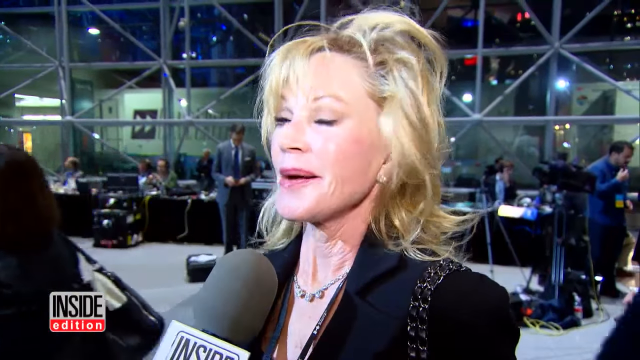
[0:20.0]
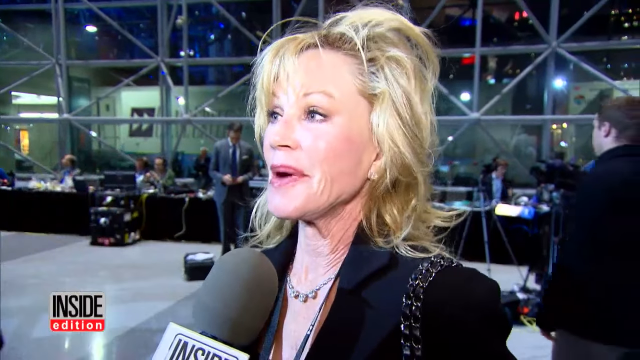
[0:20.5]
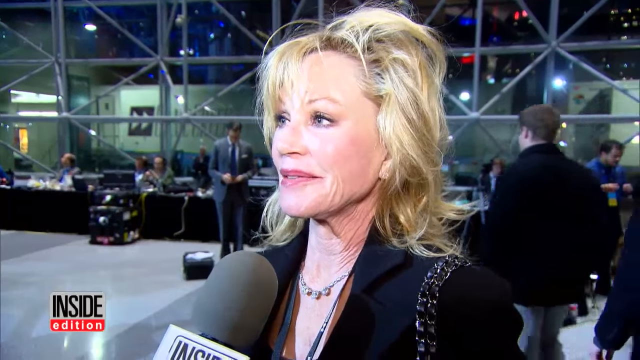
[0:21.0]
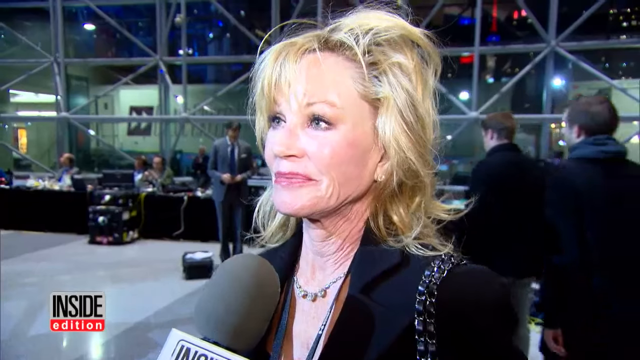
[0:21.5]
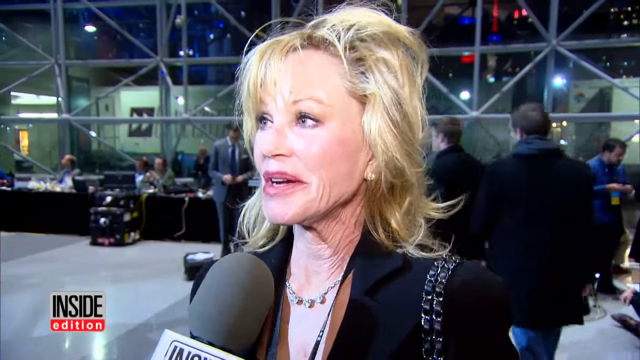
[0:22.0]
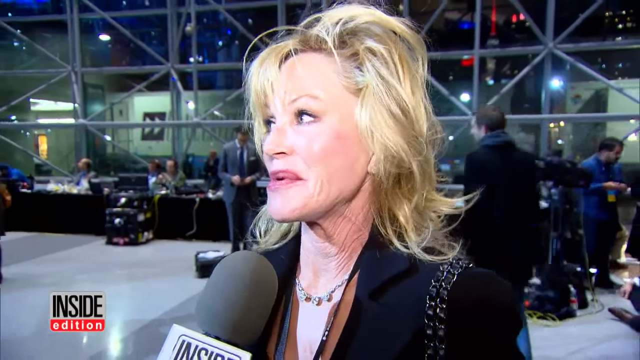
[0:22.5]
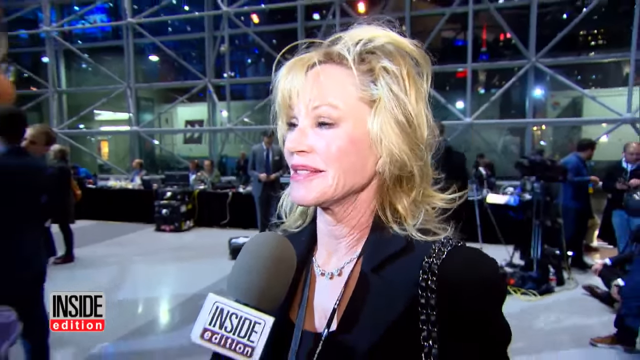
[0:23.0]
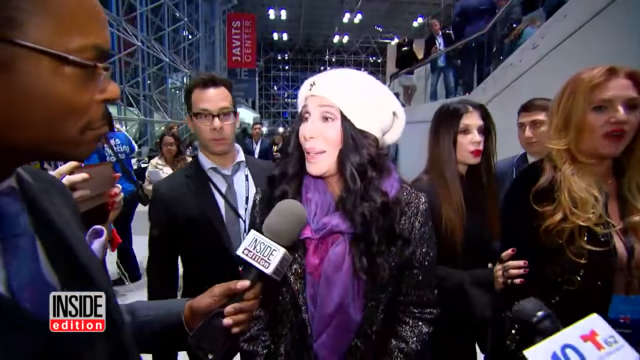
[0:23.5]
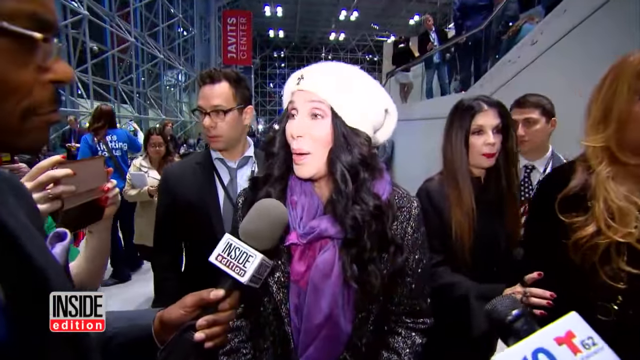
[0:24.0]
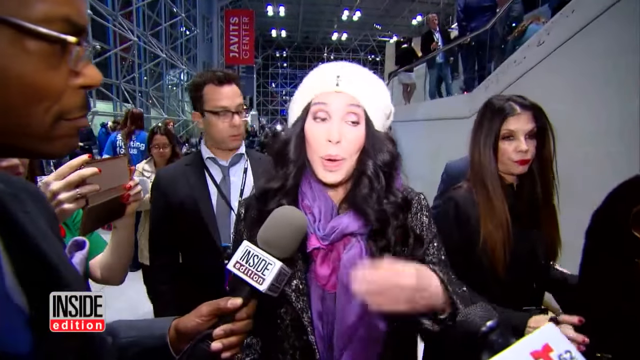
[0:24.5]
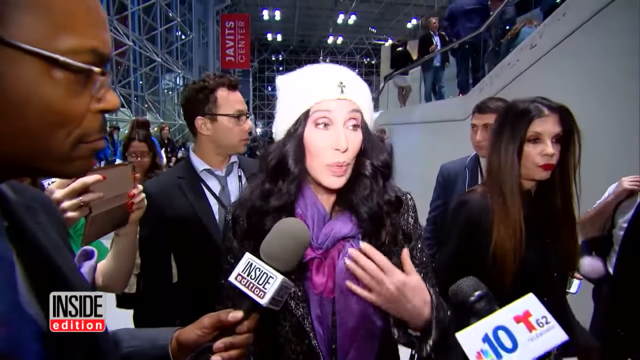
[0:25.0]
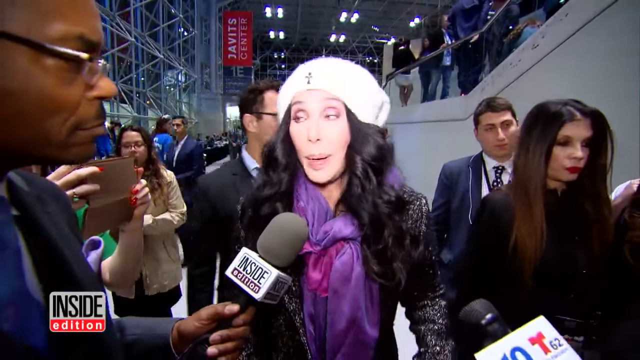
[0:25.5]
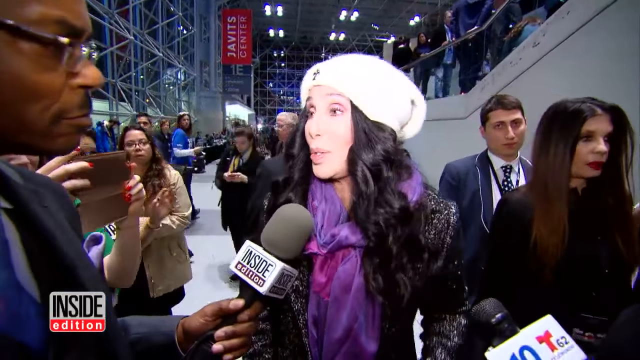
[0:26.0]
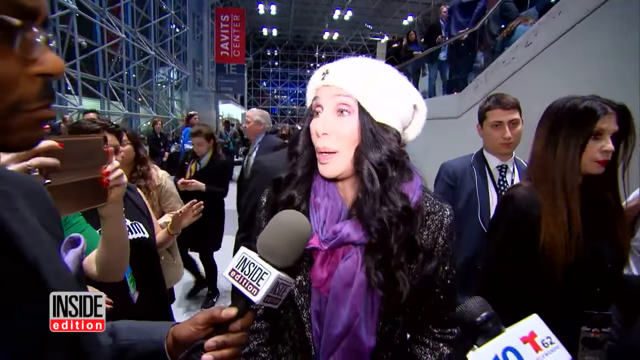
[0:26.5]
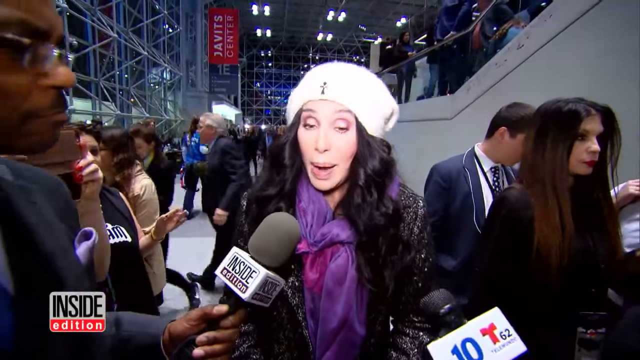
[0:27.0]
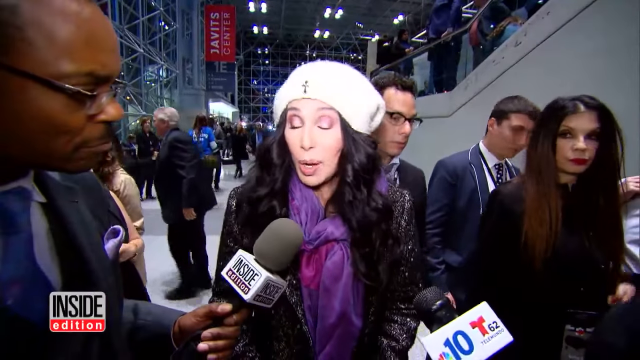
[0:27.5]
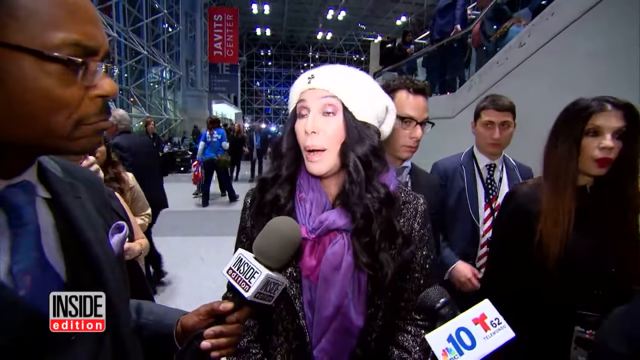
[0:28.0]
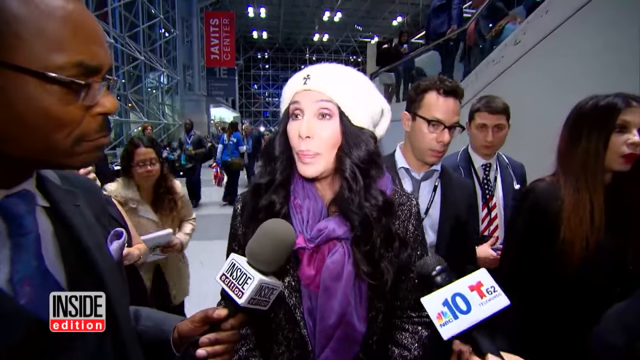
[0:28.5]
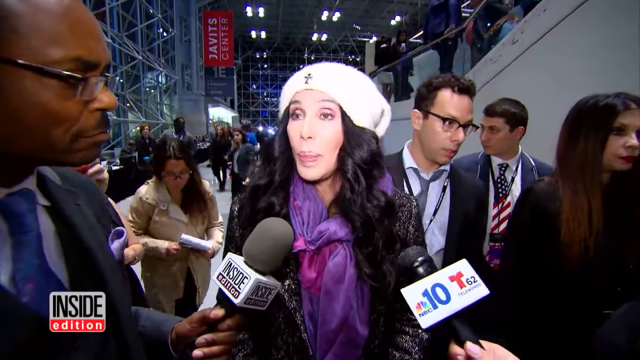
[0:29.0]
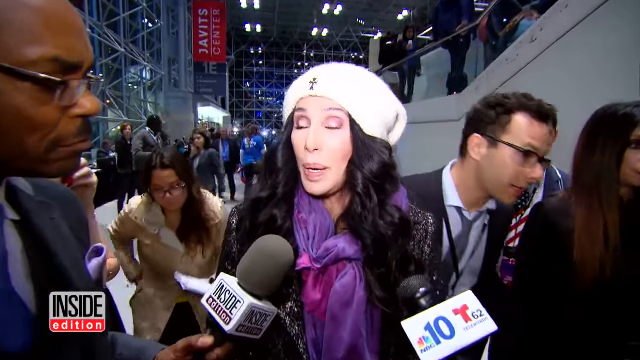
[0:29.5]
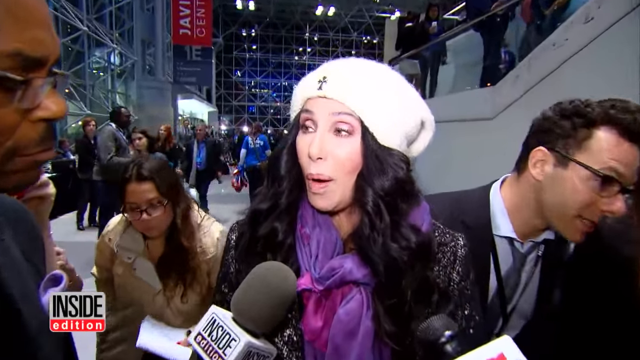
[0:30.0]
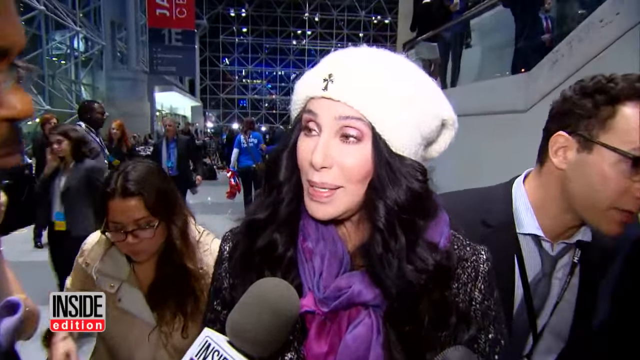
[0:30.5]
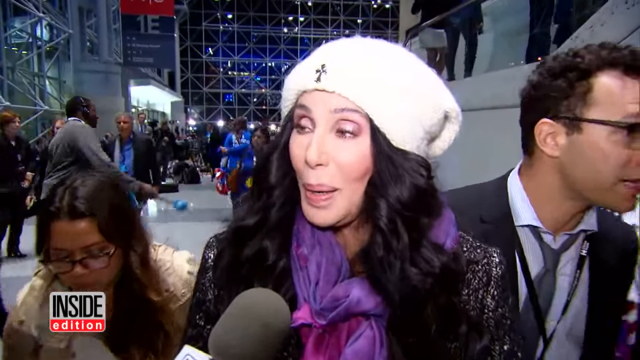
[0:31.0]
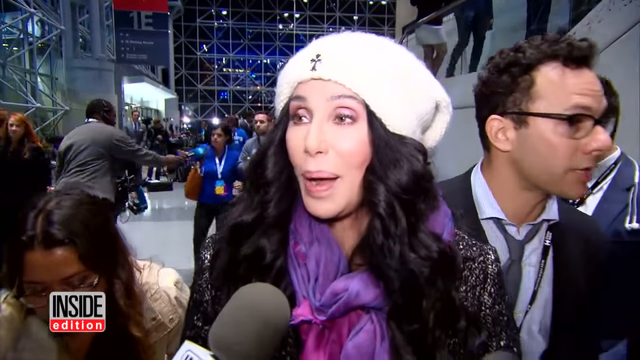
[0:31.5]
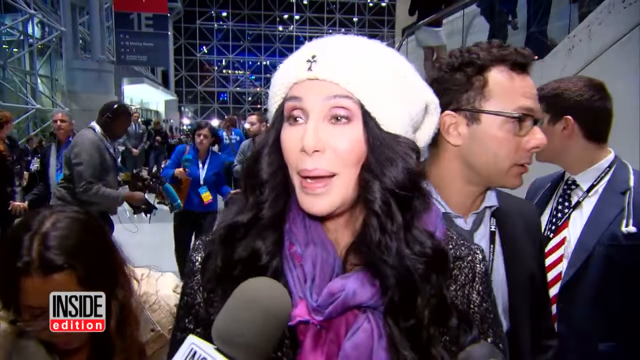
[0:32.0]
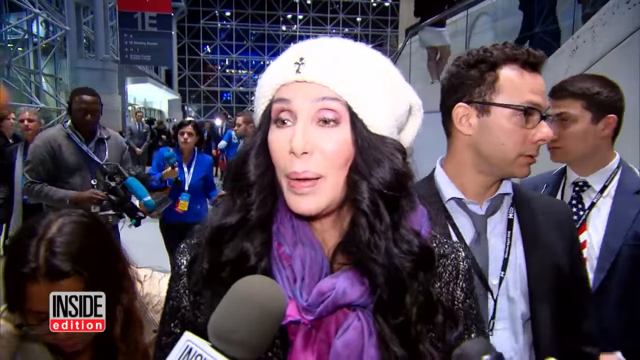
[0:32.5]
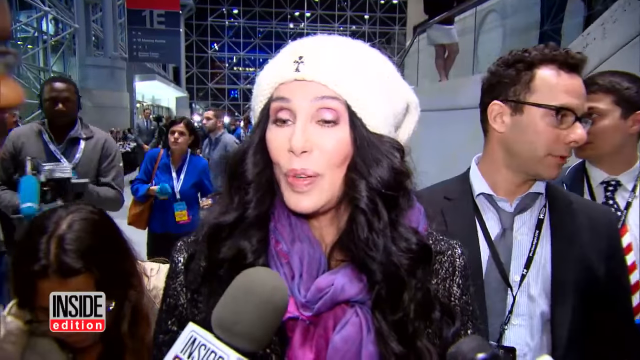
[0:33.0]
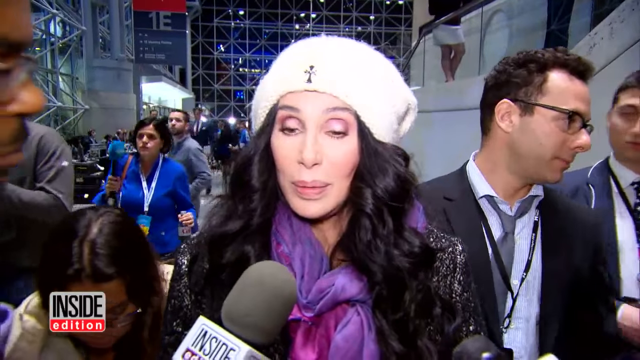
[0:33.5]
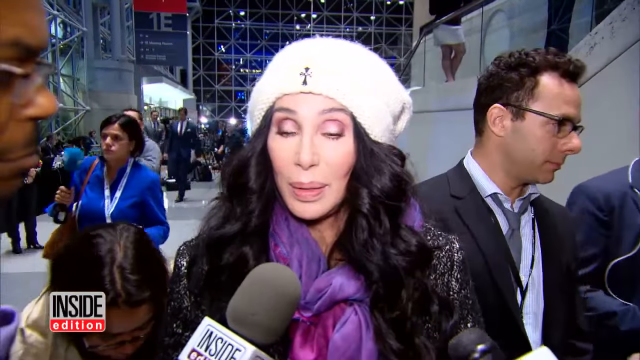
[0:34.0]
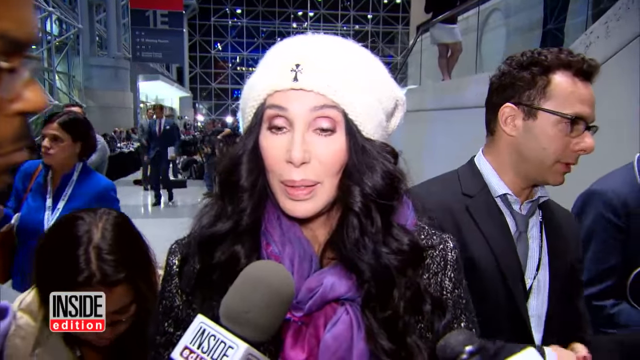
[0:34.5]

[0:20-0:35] The older white woman continues speaking to the interviewer with the microphone. The camera then shifts, and the interviewer, the Black man, is now interviewing someone else: the musician Cher. She has long black hair and wears a purple silkish scarf and a white hat, and she speaks toward the camera and into the microphone. Another microphone is in front of her, so several media outlets apparently have microphones there. Her expression does not look particularly happy; she is not crying and does not look outraged, but she looks concerned.